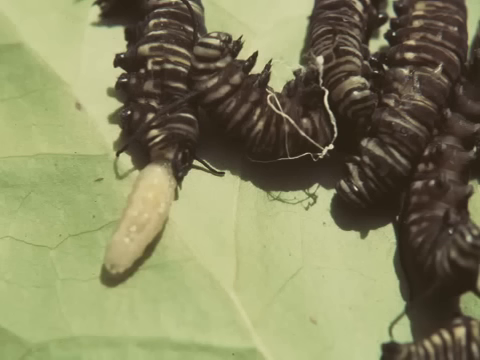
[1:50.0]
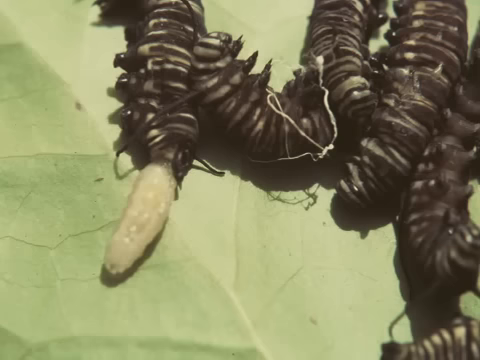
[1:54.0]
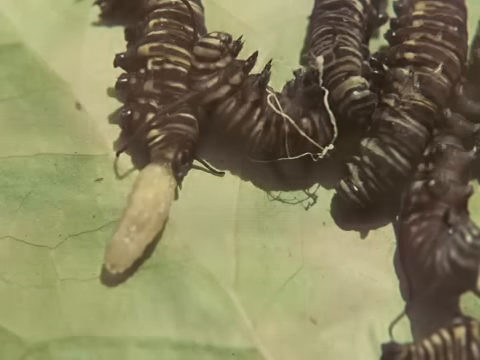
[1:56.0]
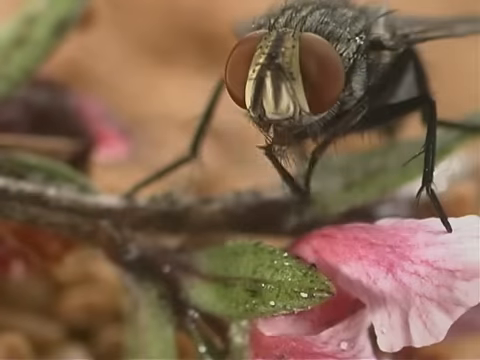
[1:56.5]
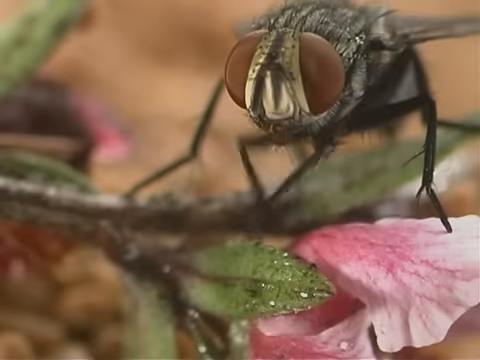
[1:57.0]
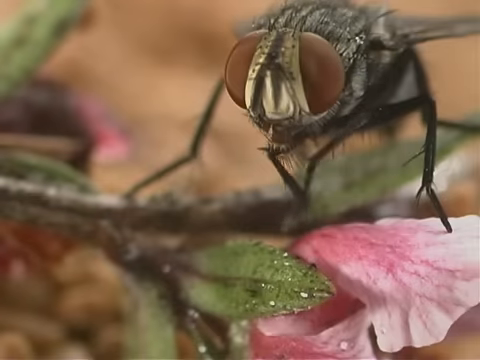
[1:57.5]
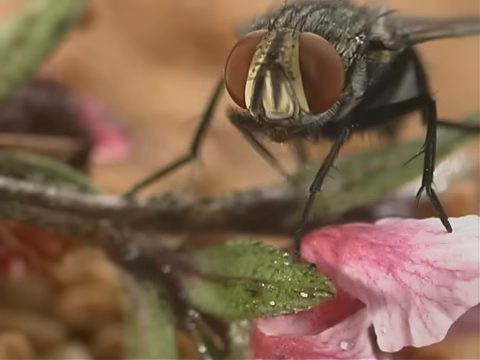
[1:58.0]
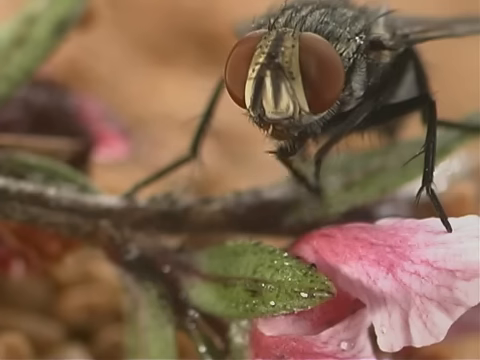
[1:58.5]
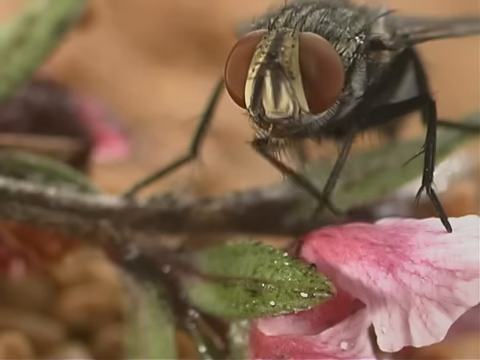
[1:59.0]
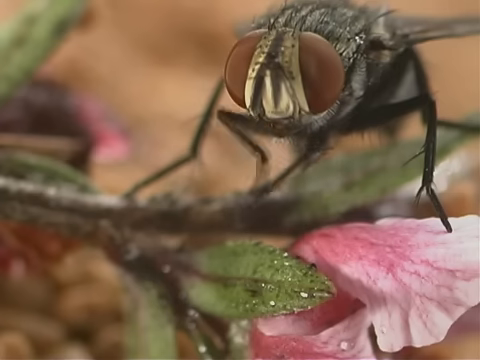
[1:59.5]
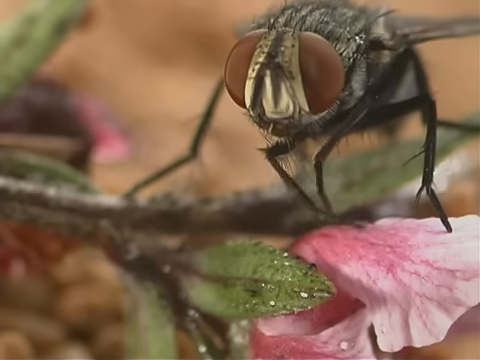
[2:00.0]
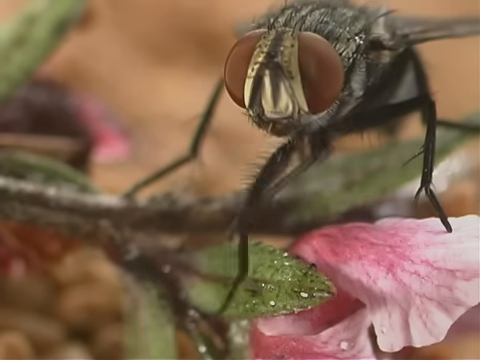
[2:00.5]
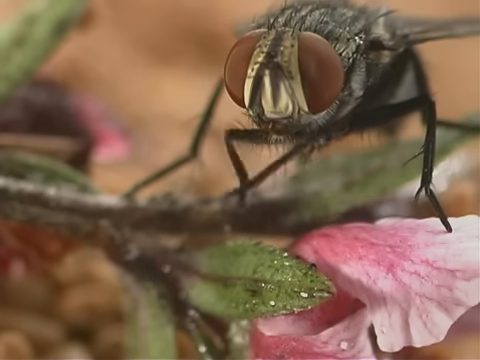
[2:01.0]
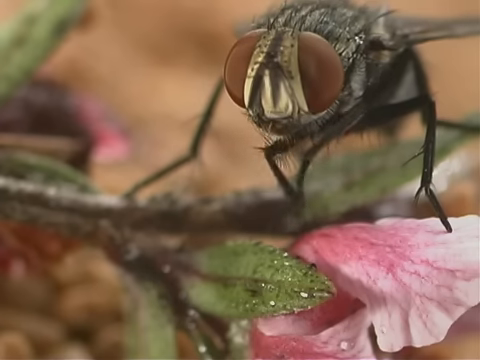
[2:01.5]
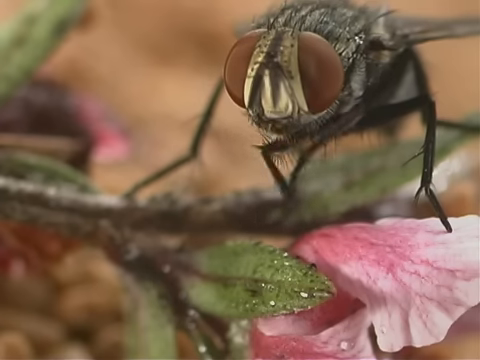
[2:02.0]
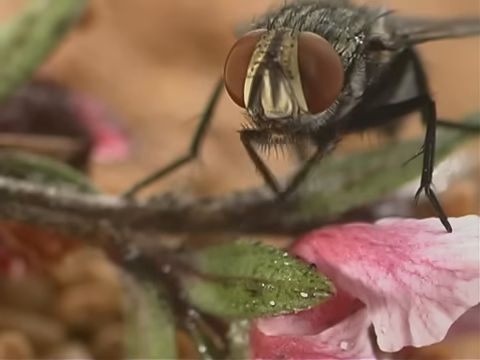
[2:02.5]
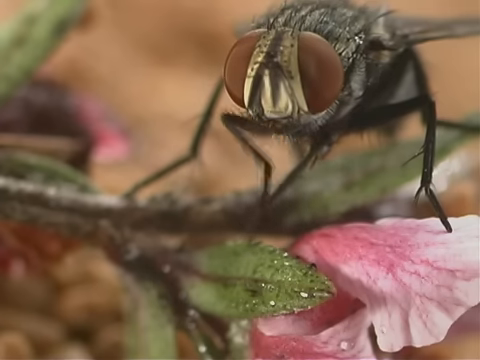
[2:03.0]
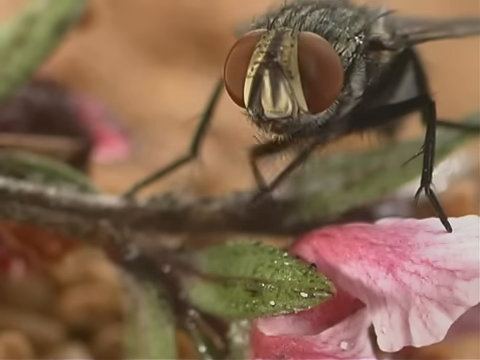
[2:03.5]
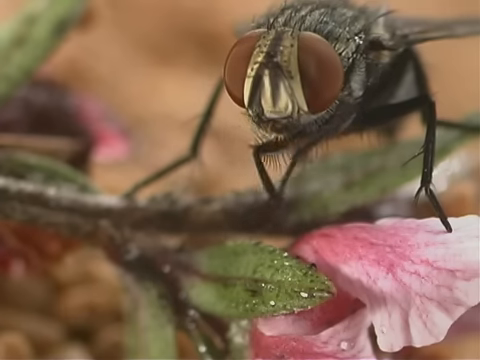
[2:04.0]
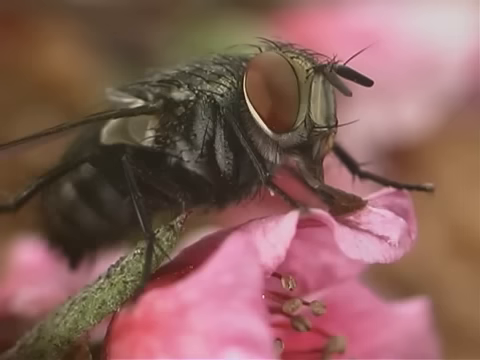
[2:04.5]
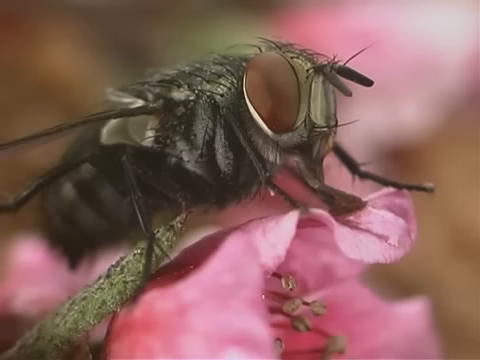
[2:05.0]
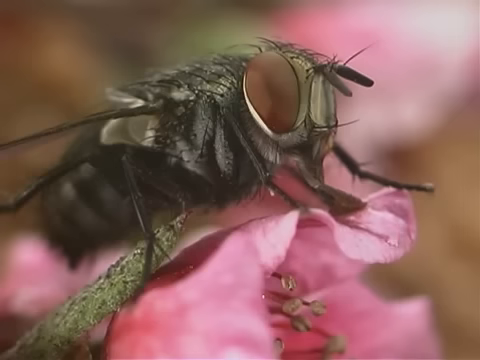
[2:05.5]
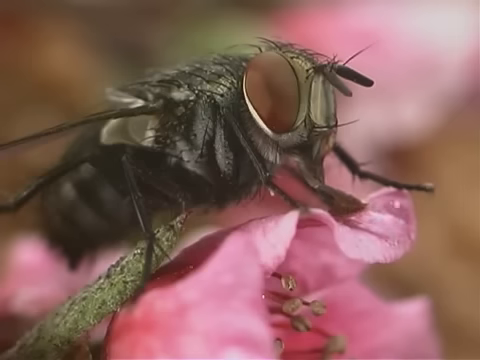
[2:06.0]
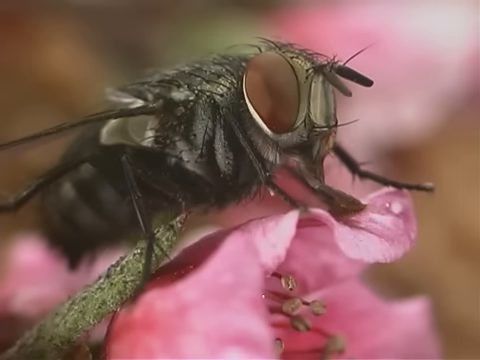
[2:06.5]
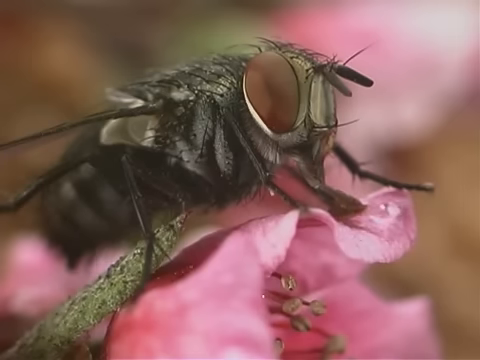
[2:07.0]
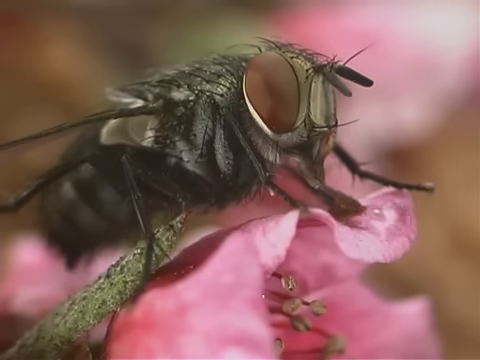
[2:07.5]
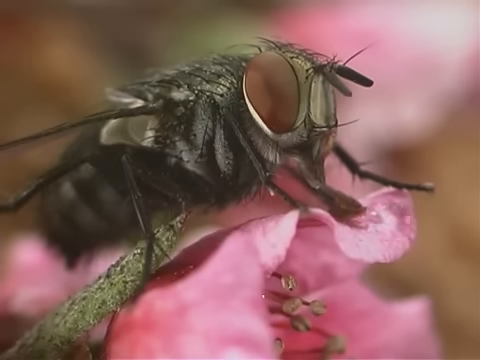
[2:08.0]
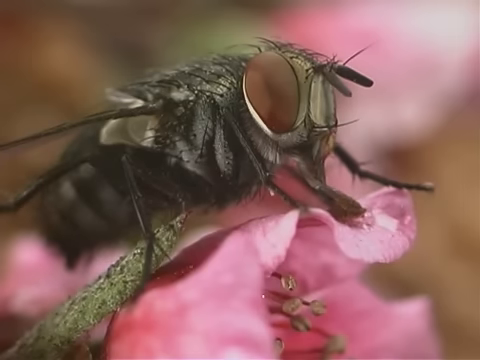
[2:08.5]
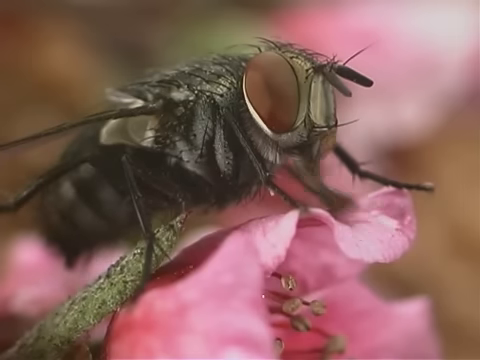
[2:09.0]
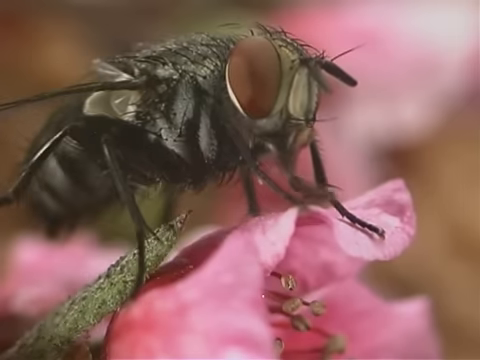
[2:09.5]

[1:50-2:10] Some caterpillars appear, apparently five of them, all lying next to each other. The video then shows another fly, with one leg on a pink leaf and another leg on what looks like it could be the stem of another leaf. Only the fly's two orange eyes, its legs, the front part of its body and one wing, on the fly's left, are visible. The fly moves its front legs back and forth, rubbing them against each other. The fly is black in colour, with a sort of green colour on its body. It sits on a pink leaf, and a little water droplet trickles down the leaf; the fly moves toward it with its two front legs and appears to be doing something with the water drop between its legs.